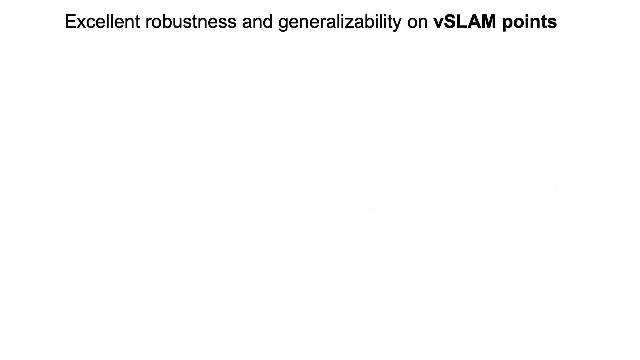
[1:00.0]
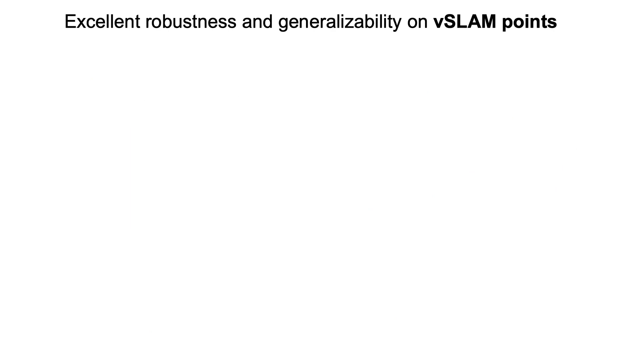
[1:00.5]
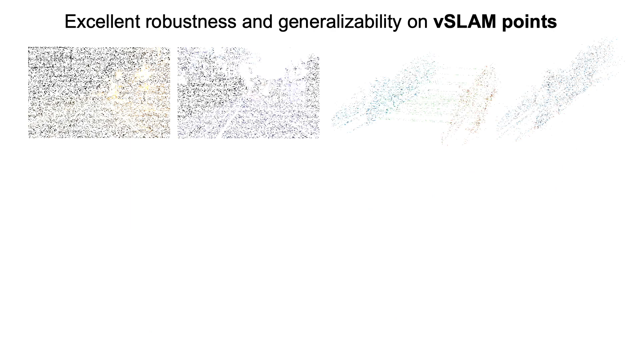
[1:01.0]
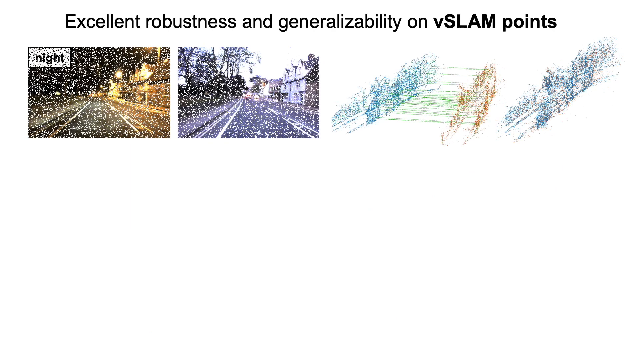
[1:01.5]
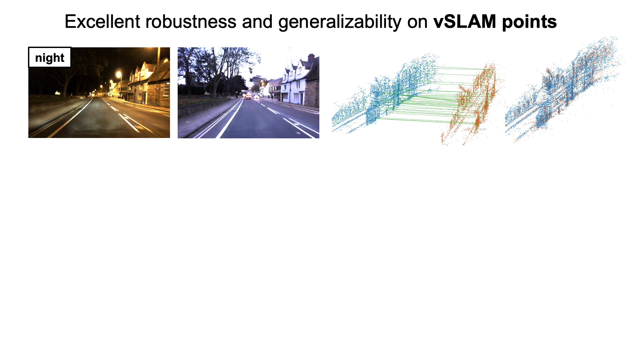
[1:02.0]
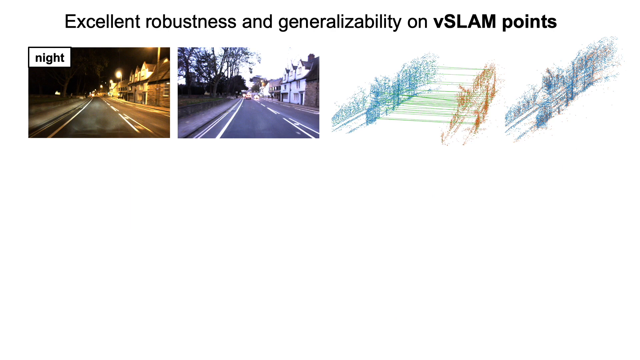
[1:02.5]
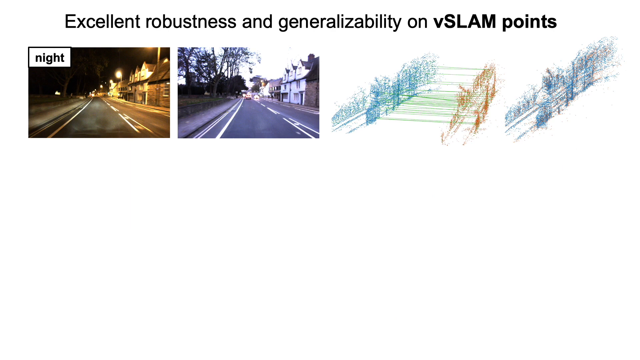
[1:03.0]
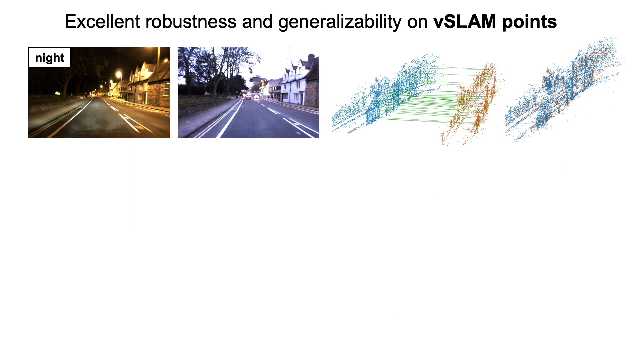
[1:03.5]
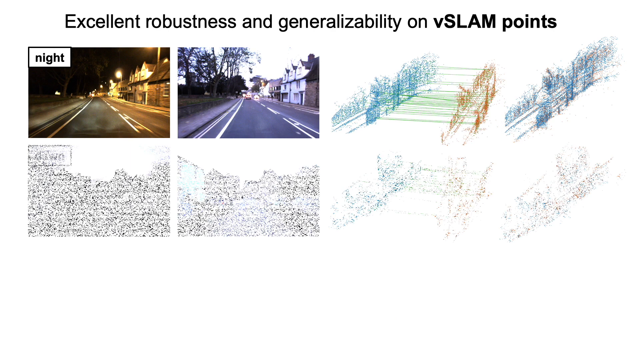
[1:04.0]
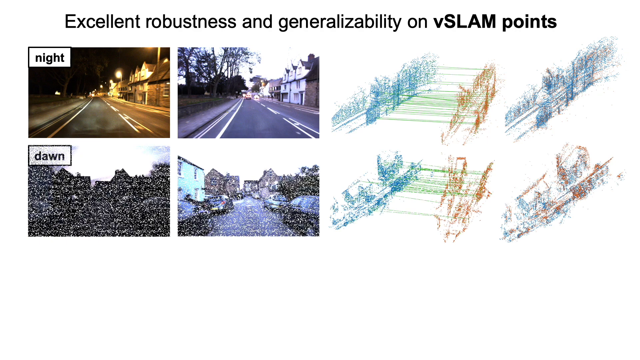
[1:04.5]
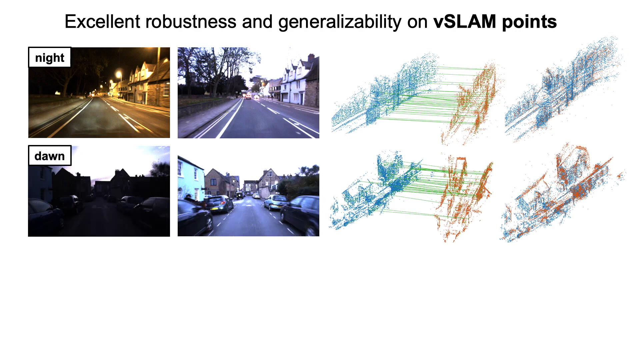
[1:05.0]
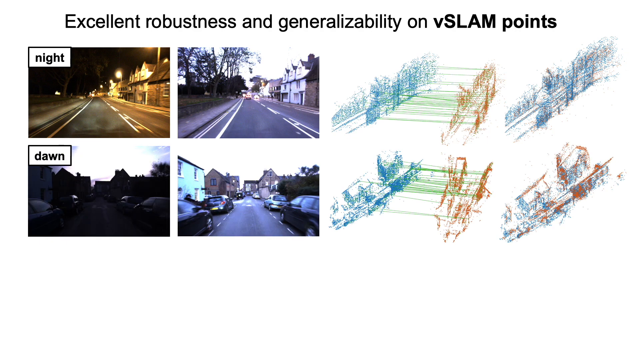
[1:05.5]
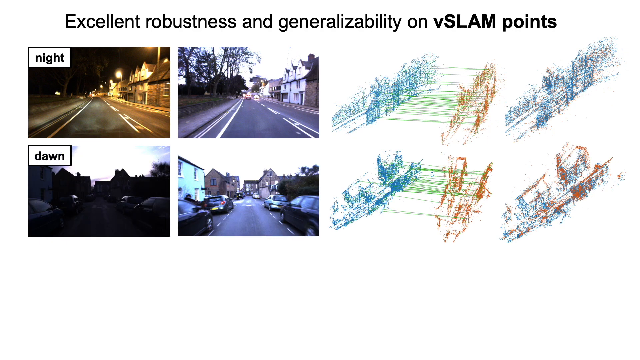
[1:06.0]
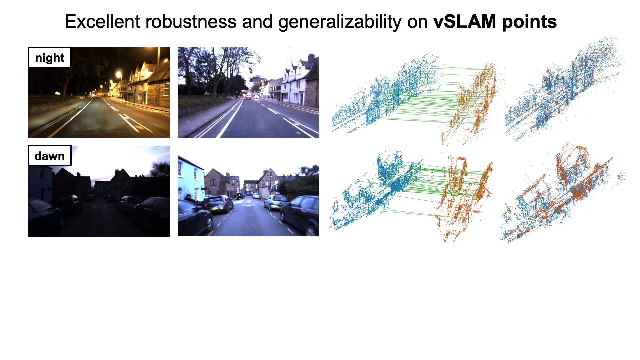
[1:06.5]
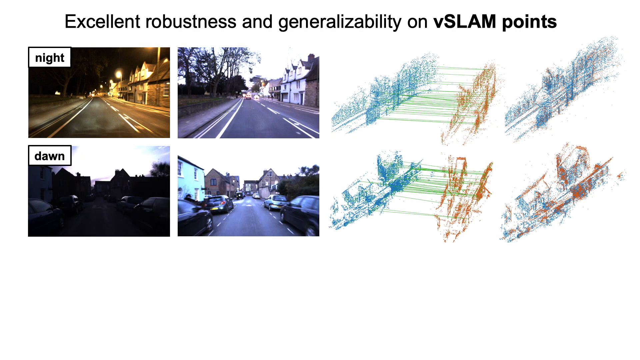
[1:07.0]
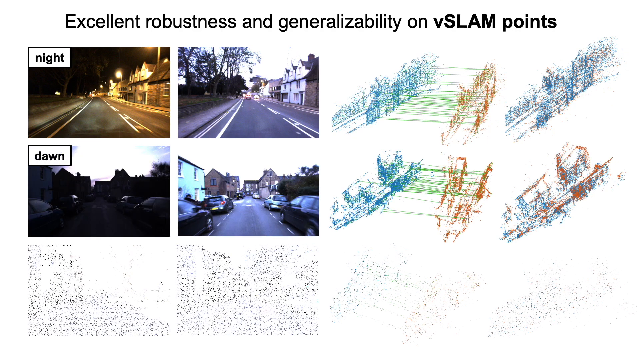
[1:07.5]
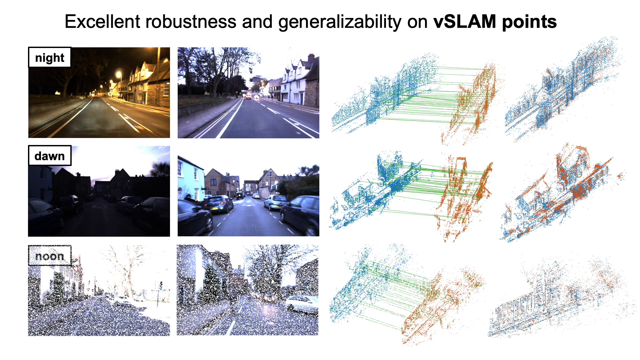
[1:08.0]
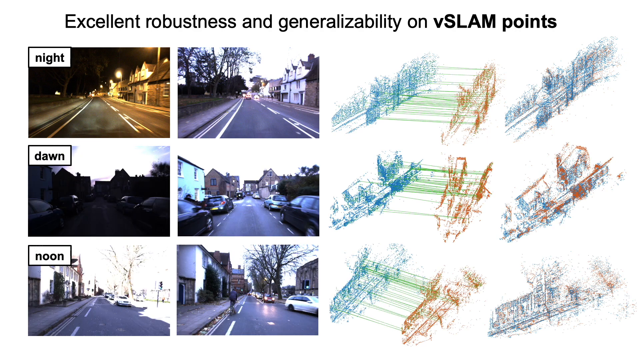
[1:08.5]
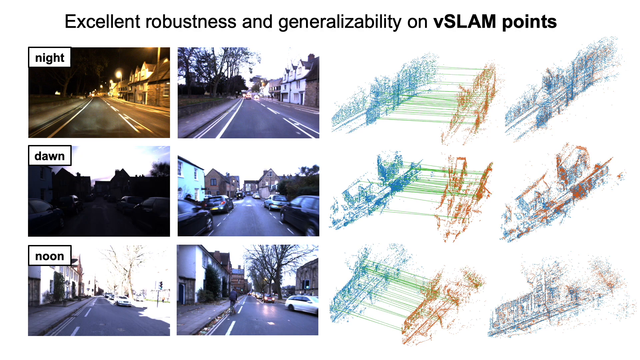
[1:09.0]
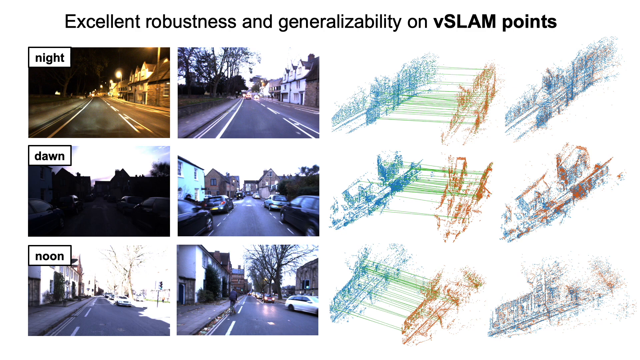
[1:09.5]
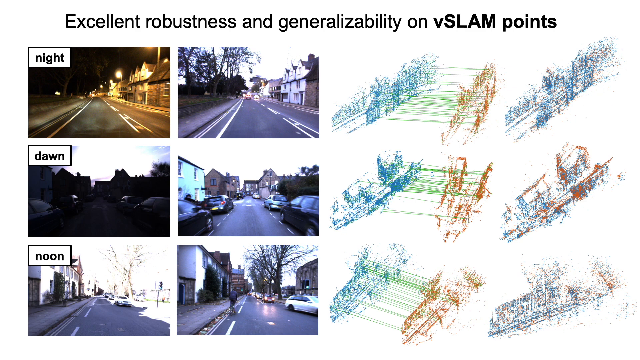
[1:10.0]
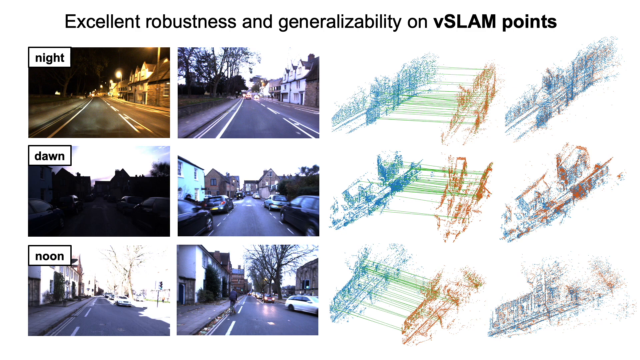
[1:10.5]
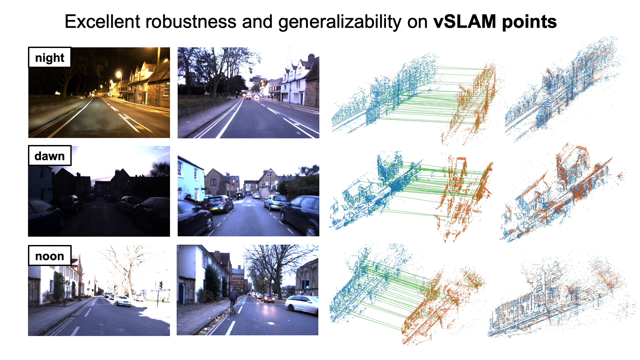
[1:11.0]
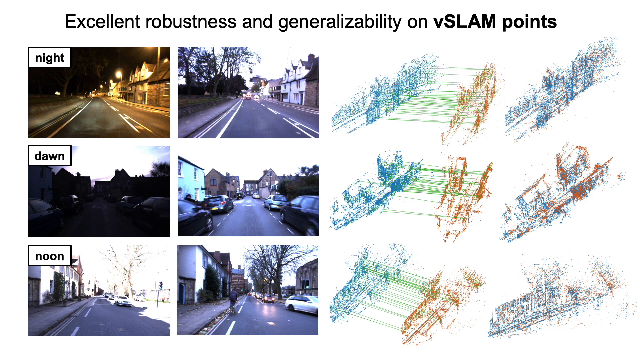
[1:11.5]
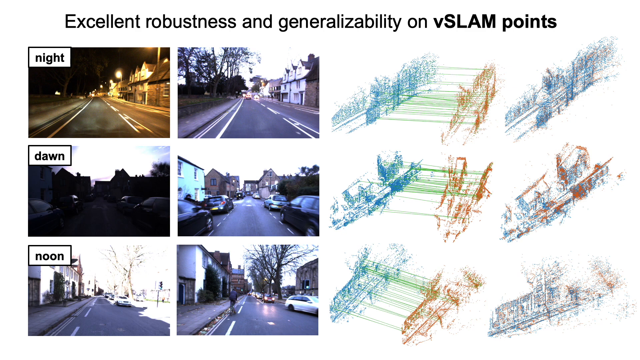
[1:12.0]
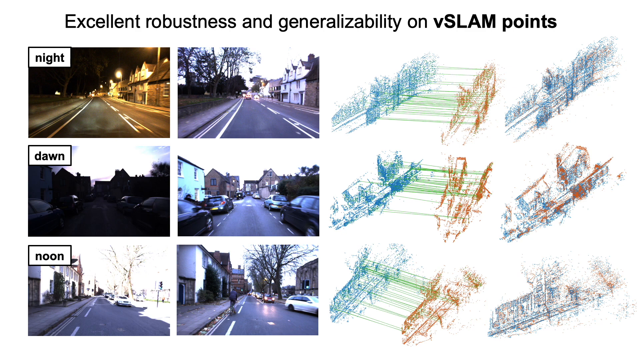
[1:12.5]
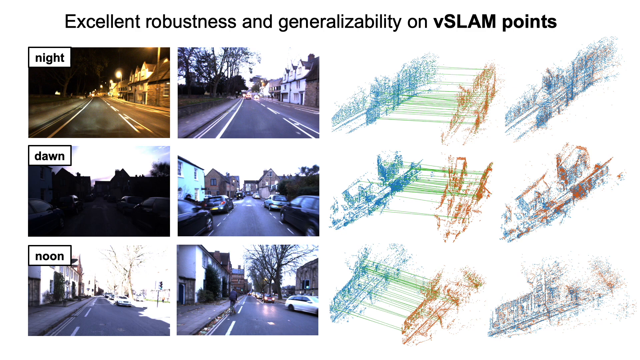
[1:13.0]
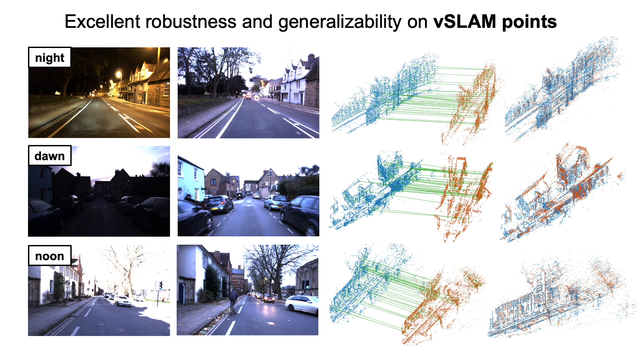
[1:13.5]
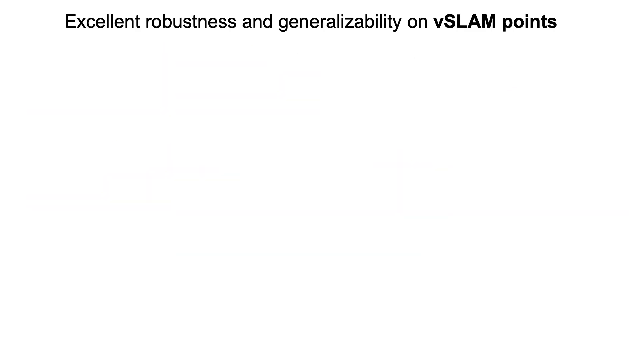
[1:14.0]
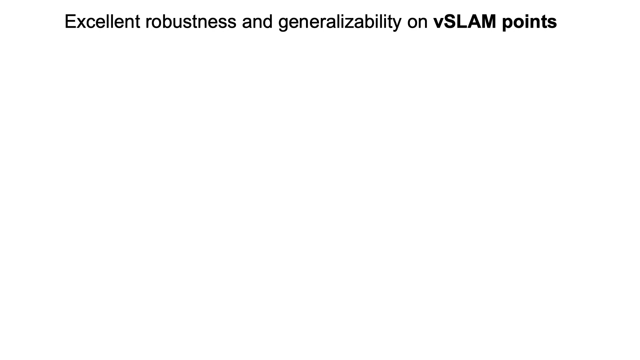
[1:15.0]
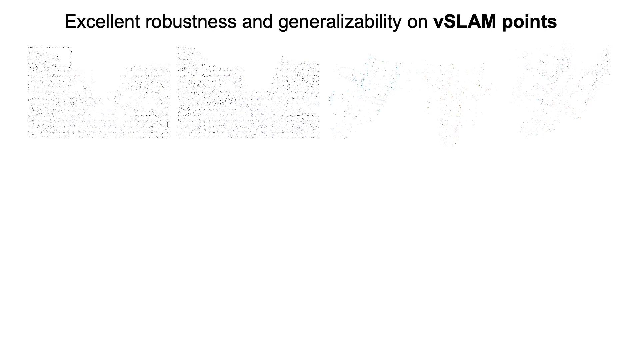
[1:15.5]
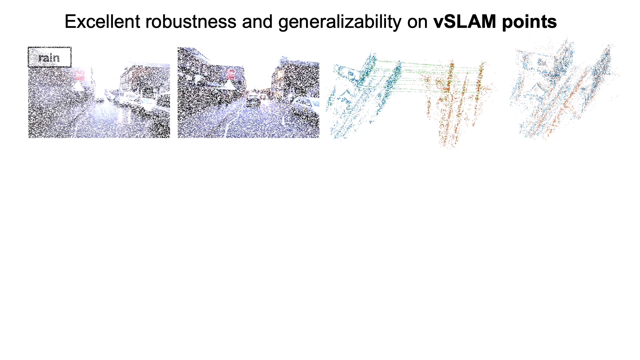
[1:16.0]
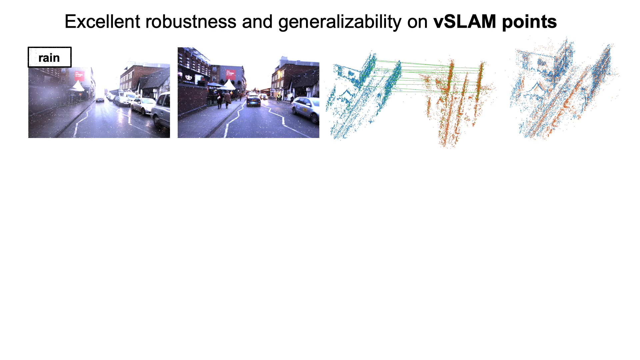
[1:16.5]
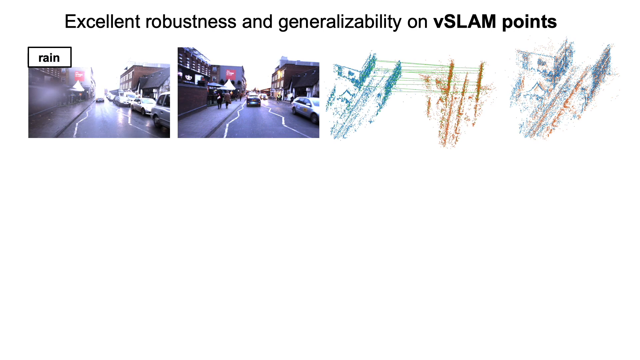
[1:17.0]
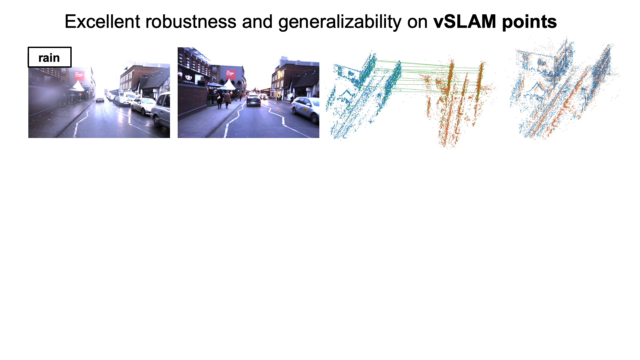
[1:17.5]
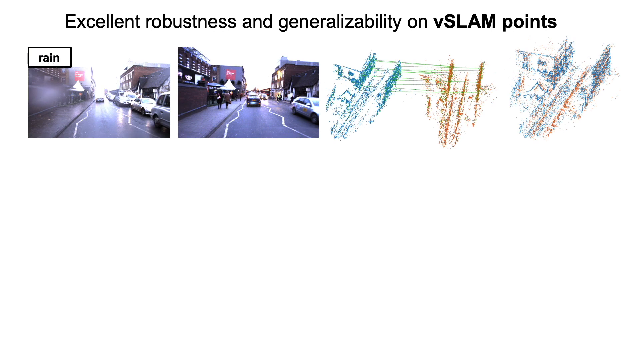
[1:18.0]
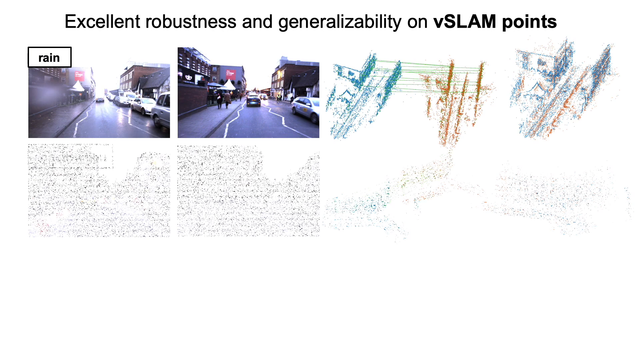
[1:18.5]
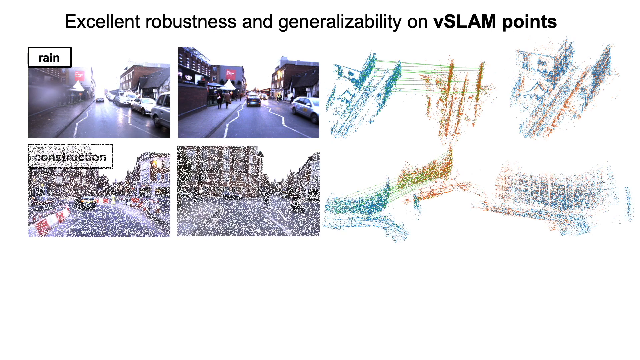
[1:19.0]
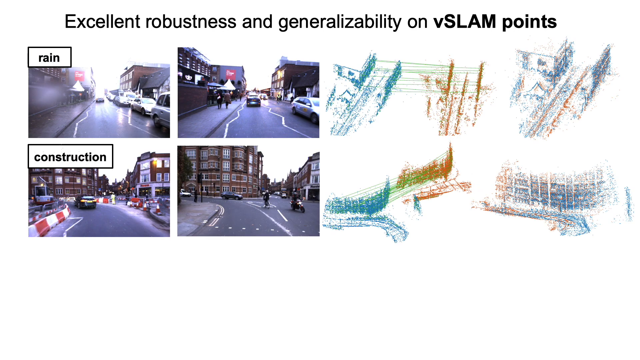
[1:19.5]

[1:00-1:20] A page titled "Excellent Robustness and Generalisability on V-slam Points" appears. Two photographs on the right show a street, one at night and one in the daytime, and to the right-hand side are images of both in graphic form. Underneath, two more photographs appear, one taken at dawn and another in the daytime, and more graphics appear on the right-hand side. Two further photographs taken at noon appear, again with further graphics on the right-hand side. Another title page follows, "excellent robustness and generalisability on V-slam points," with photographs on the left-hand side: two in rain, compared to one that doesn't appear to be in rain, with two graphics appearing on the right-hand side. Two further photographs then show construction.